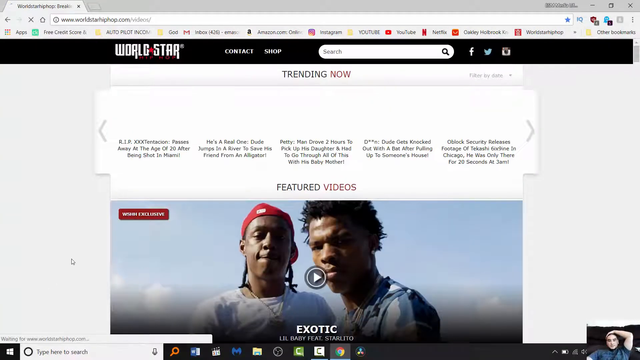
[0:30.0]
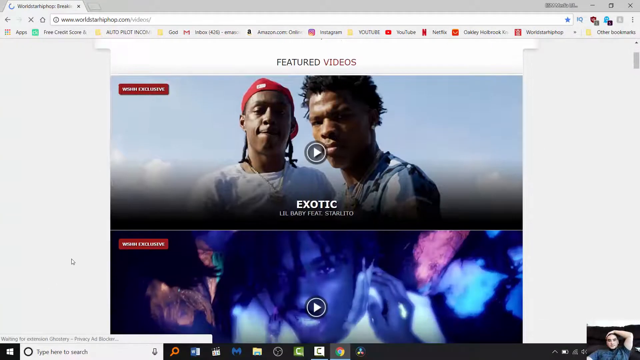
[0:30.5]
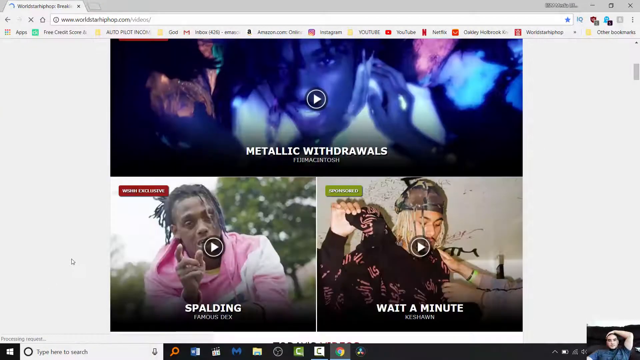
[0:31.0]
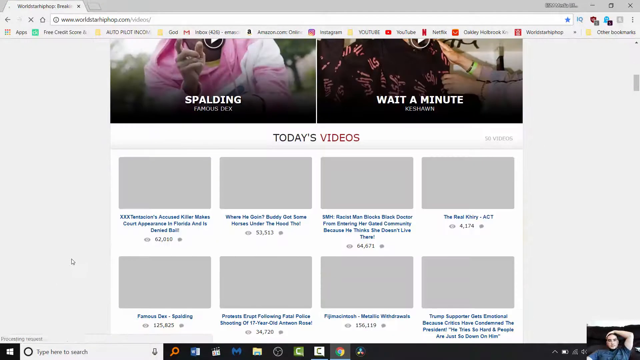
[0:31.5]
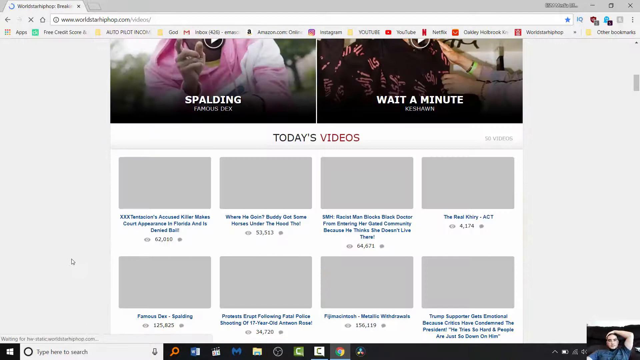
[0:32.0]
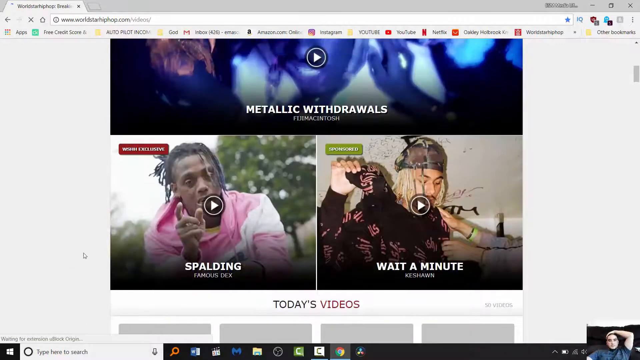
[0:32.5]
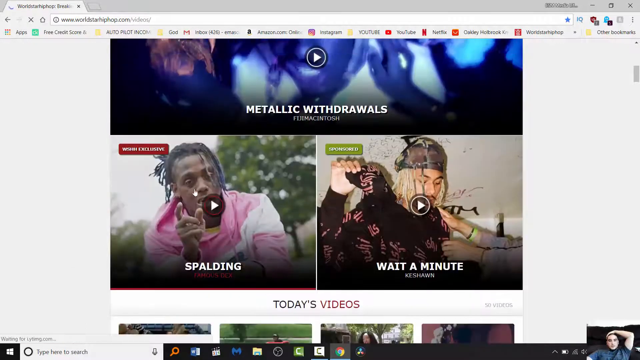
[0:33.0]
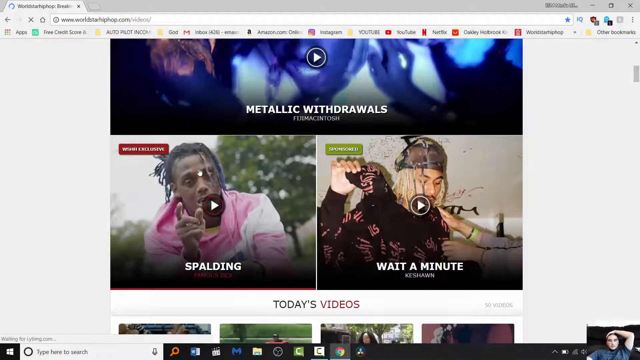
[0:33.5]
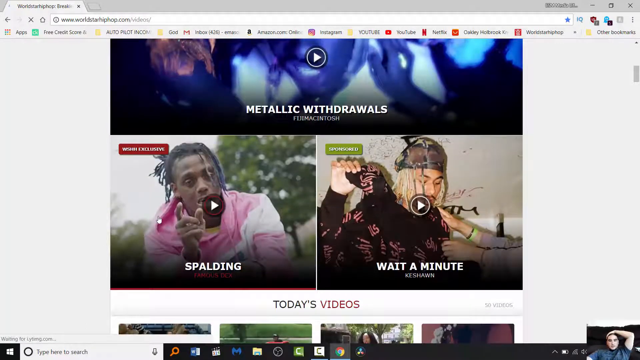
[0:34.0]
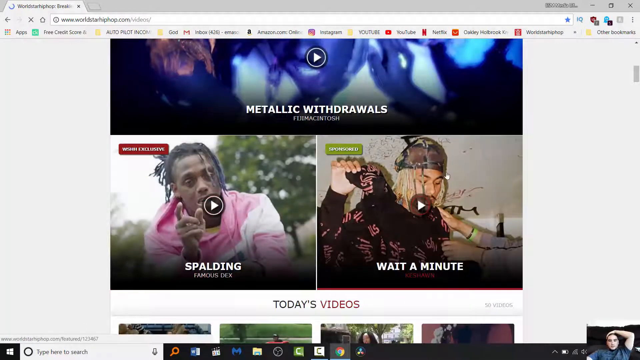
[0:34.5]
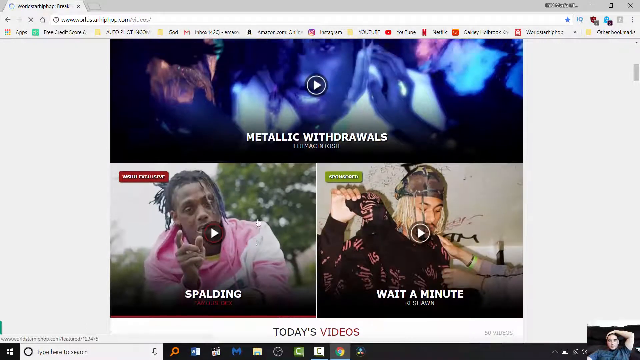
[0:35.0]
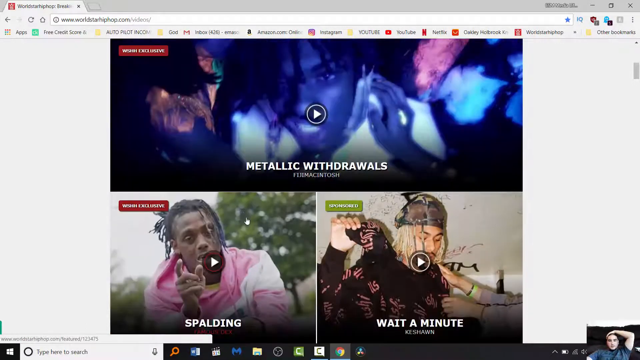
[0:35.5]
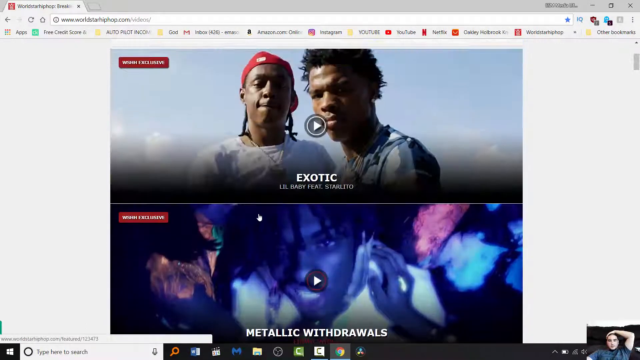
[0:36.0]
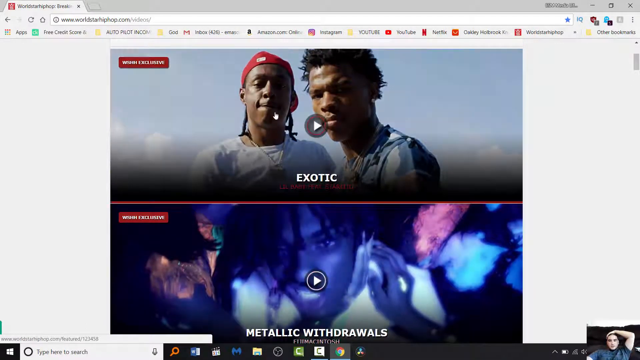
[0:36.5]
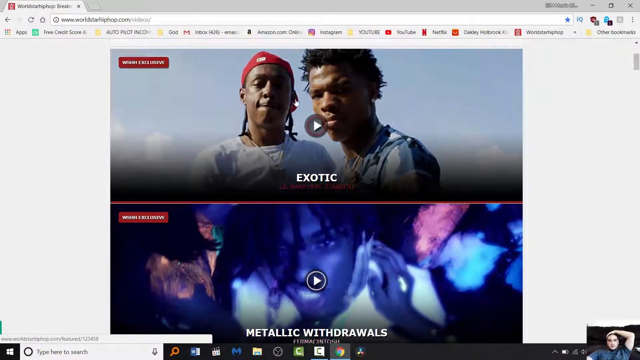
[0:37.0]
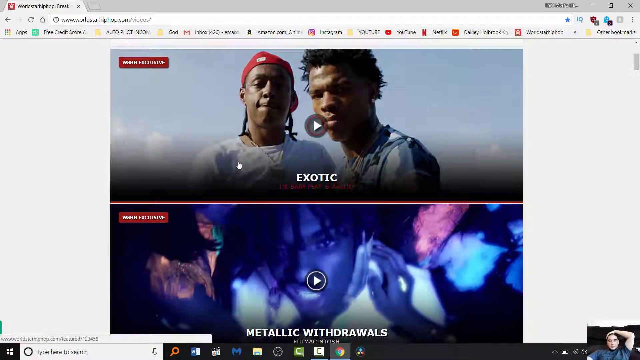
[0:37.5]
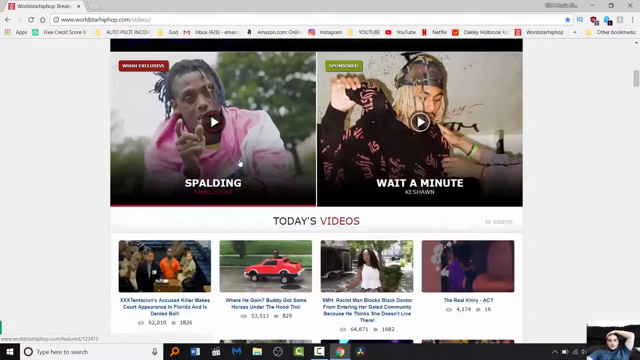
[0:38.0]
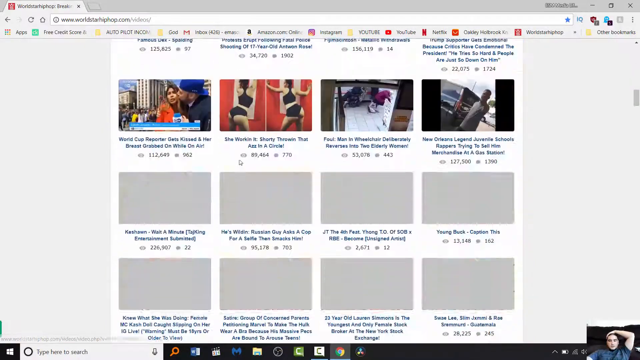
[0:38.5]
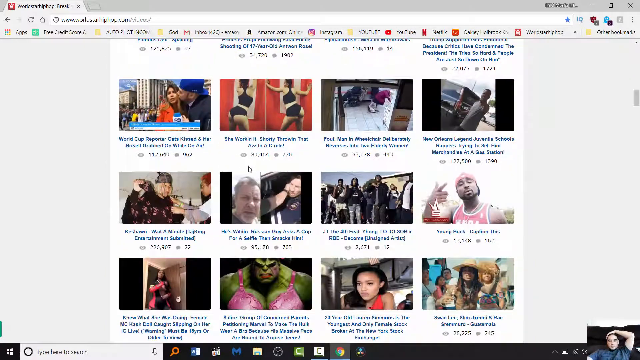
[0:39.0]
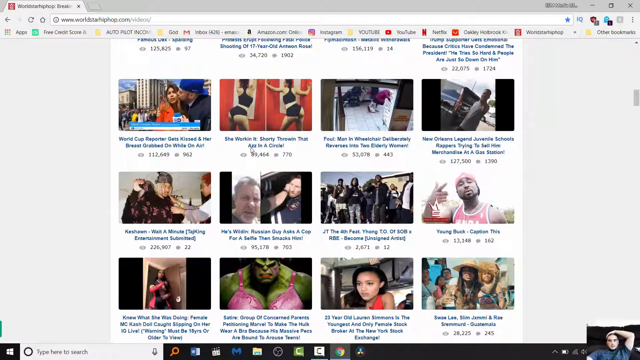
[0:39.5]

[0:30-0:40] The shared computer screen shows a page called World Star open in the Chrome browser. At the top of the page is the title 'trending now', with five headlines below it. The man scrolls down the page under featured videos. The first video is named 'Exotic' and has a picture of two young African-American men. The second, called 'metallic withdrawals', has a picture of an African-American man in dreadlocks. Below that are two separate videos side by side: the one on the left is named 'Spalding' and the one on the right 'Wait a Minute'. The pointer hovers above the videos but does not click any of them.